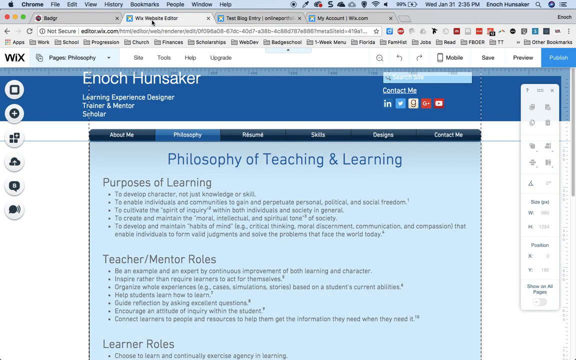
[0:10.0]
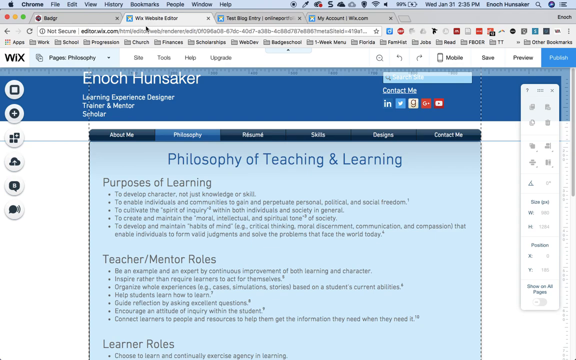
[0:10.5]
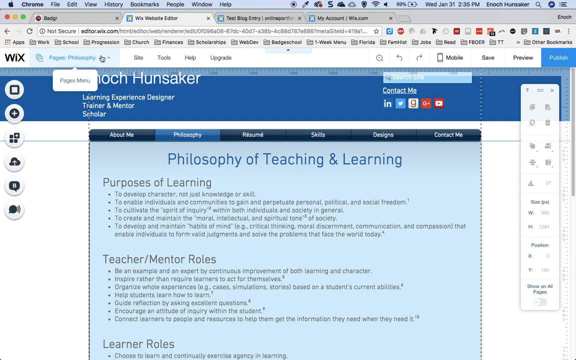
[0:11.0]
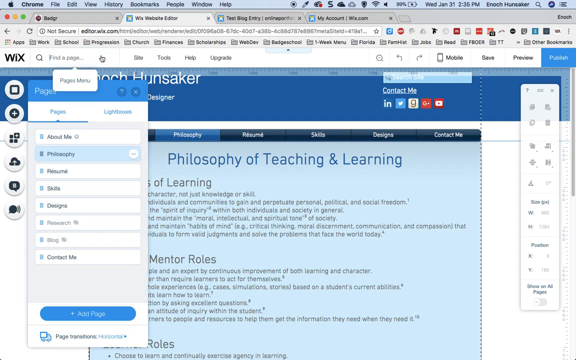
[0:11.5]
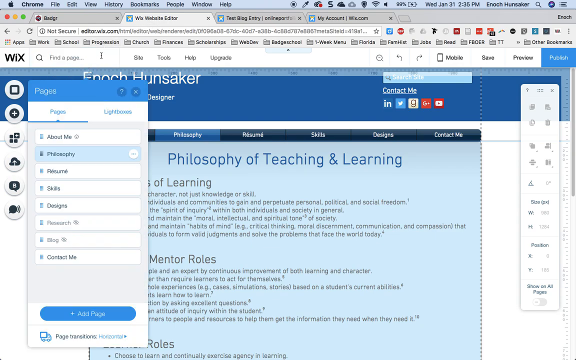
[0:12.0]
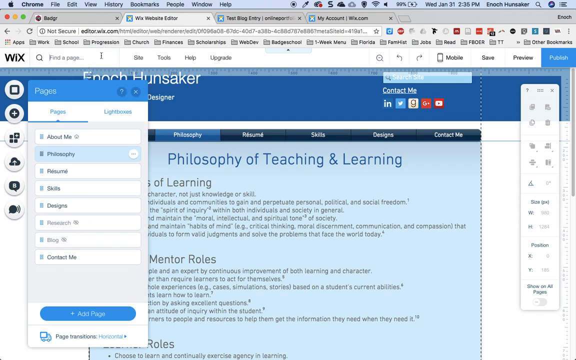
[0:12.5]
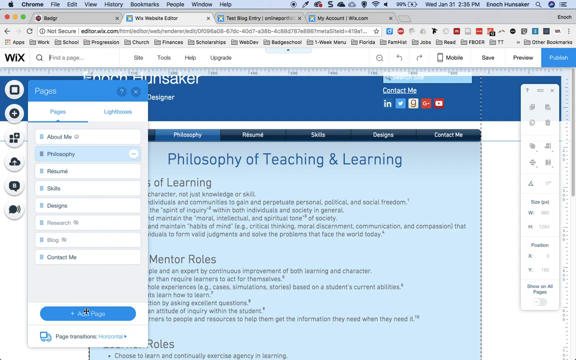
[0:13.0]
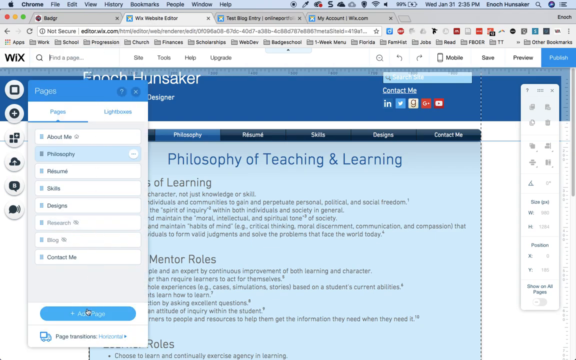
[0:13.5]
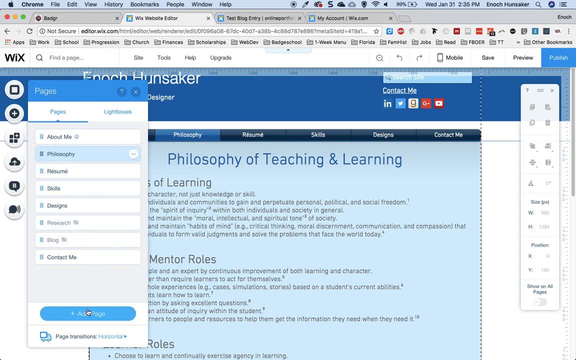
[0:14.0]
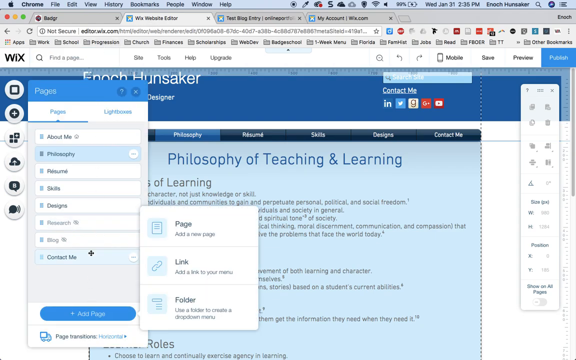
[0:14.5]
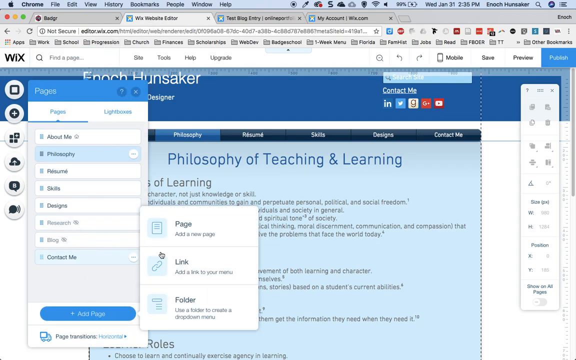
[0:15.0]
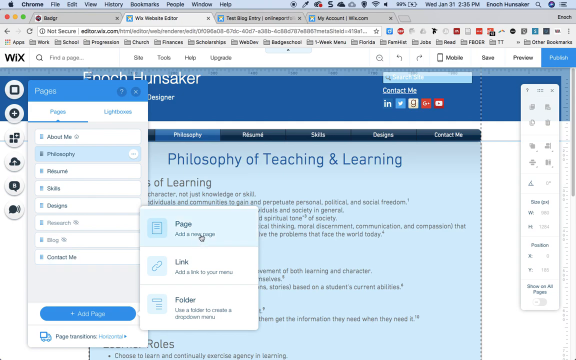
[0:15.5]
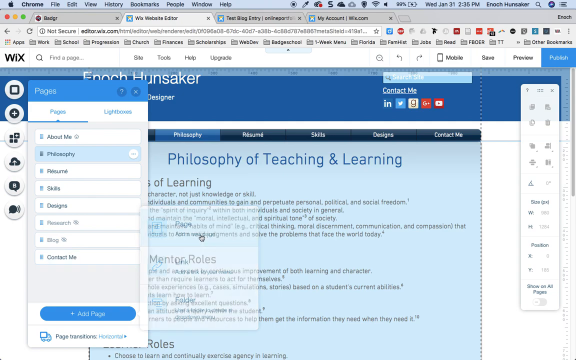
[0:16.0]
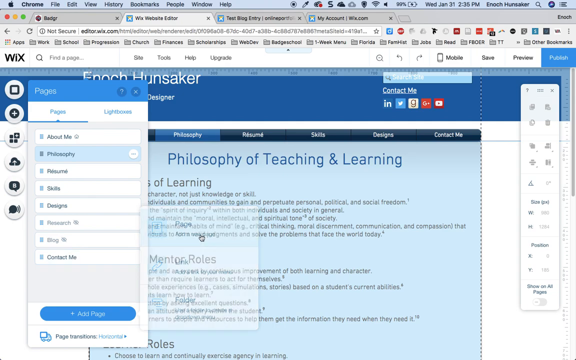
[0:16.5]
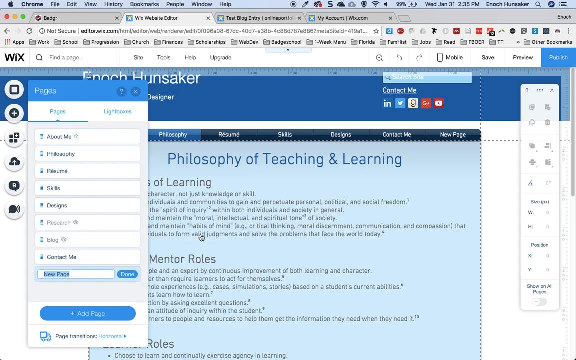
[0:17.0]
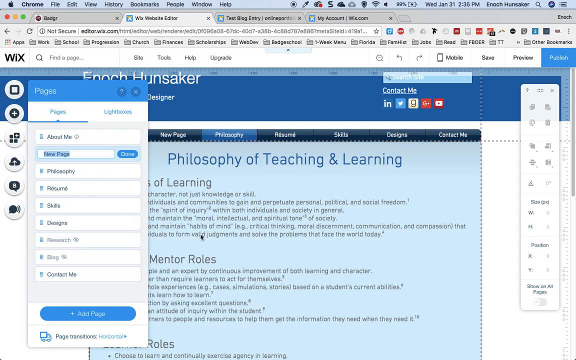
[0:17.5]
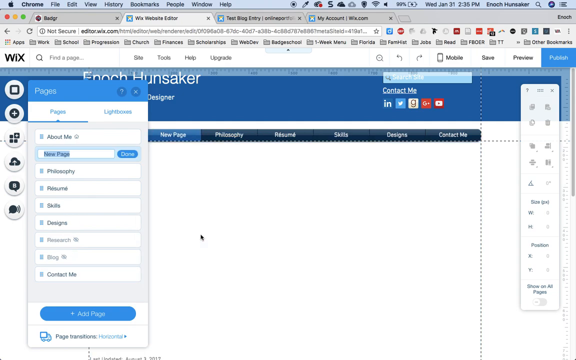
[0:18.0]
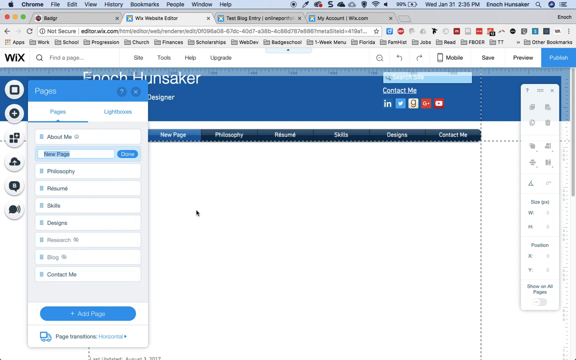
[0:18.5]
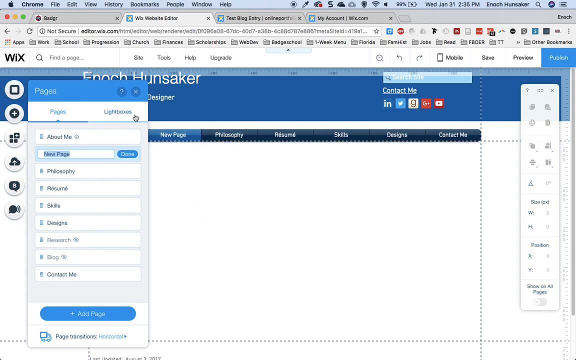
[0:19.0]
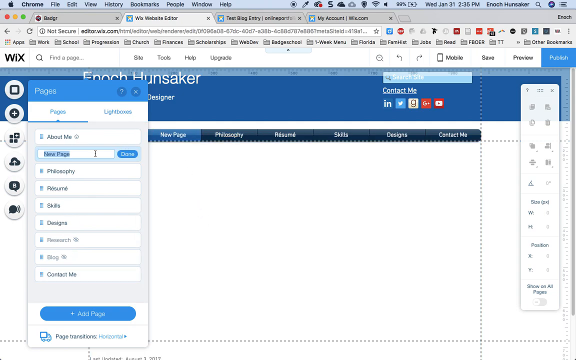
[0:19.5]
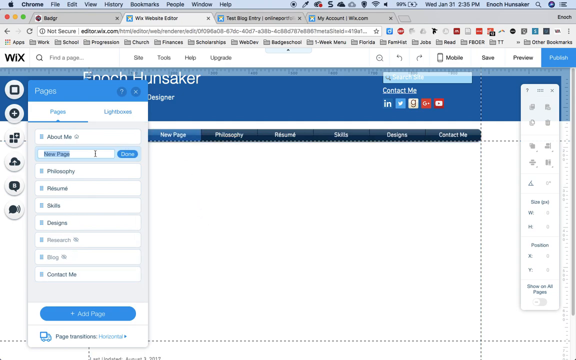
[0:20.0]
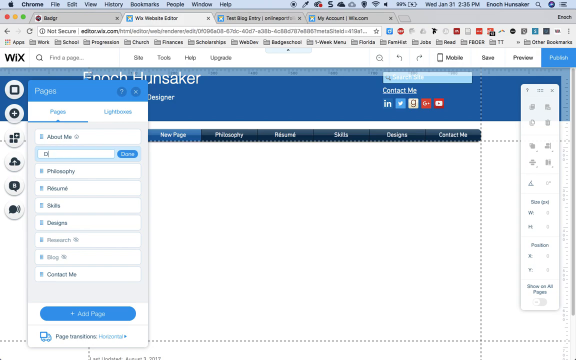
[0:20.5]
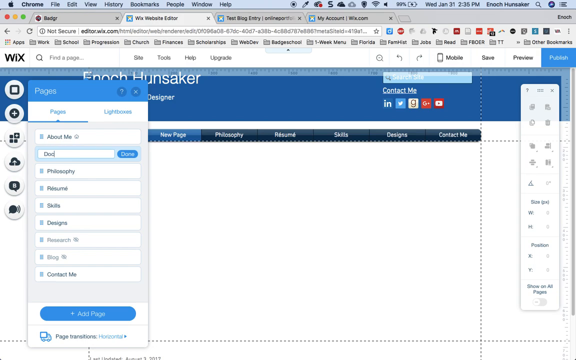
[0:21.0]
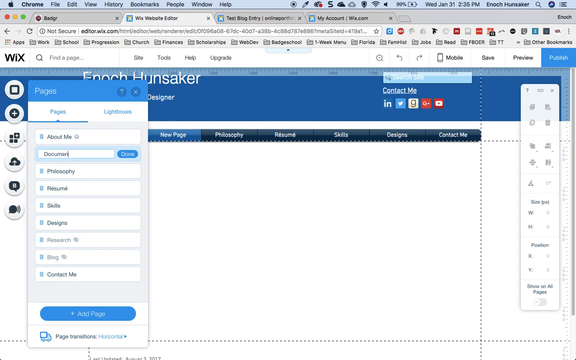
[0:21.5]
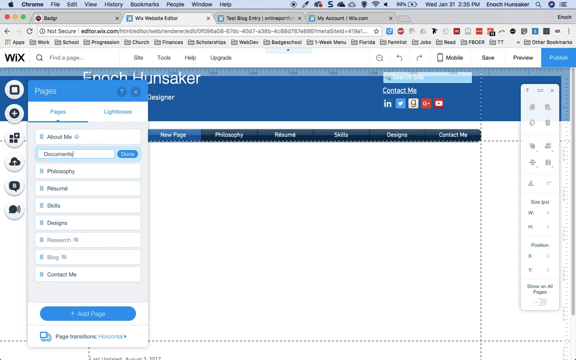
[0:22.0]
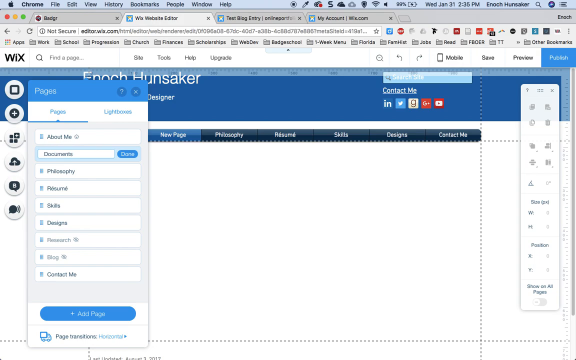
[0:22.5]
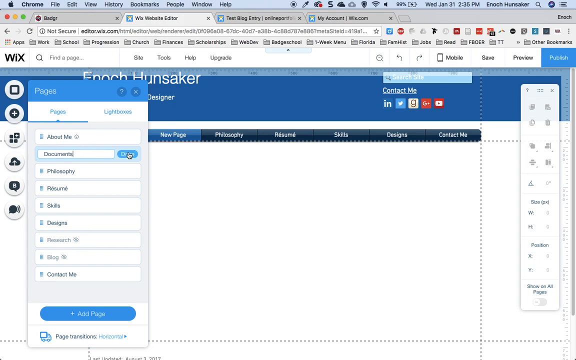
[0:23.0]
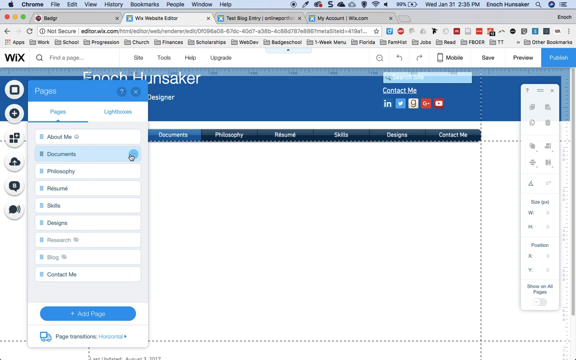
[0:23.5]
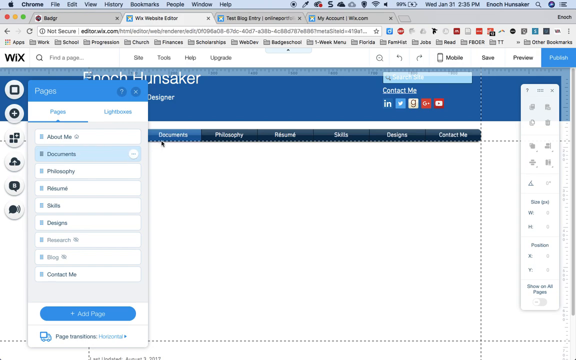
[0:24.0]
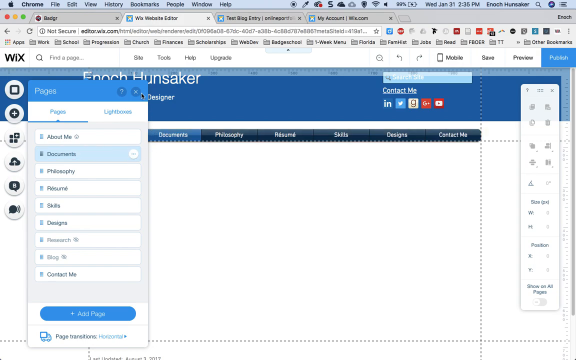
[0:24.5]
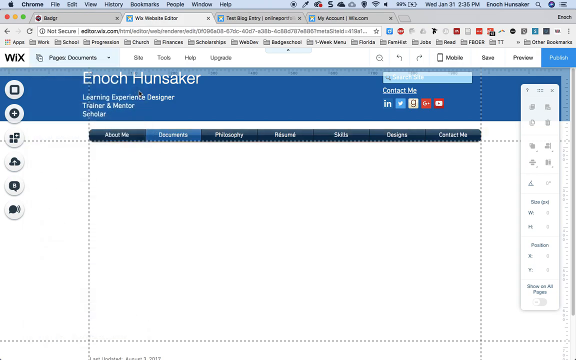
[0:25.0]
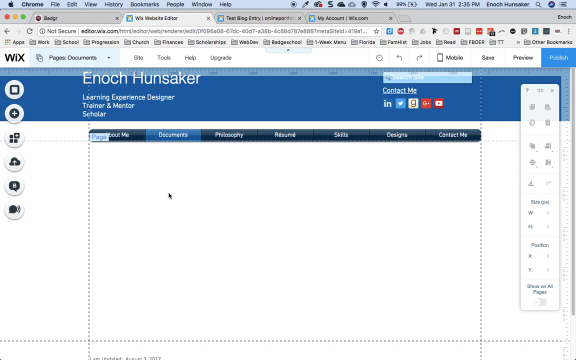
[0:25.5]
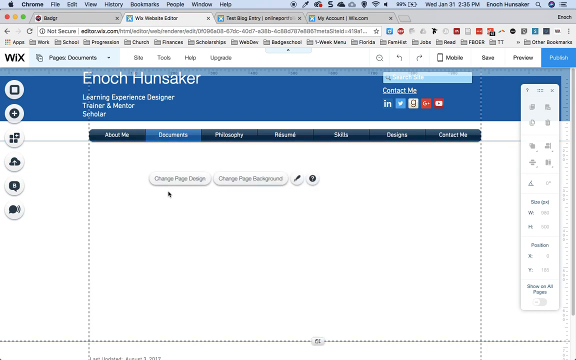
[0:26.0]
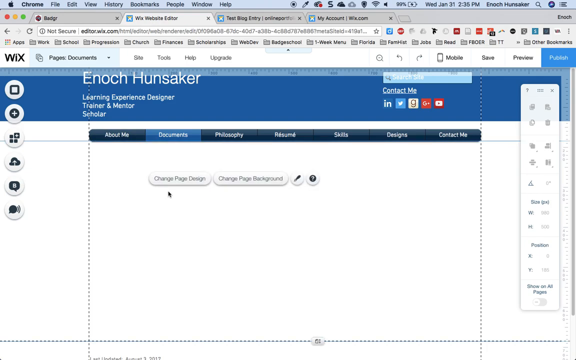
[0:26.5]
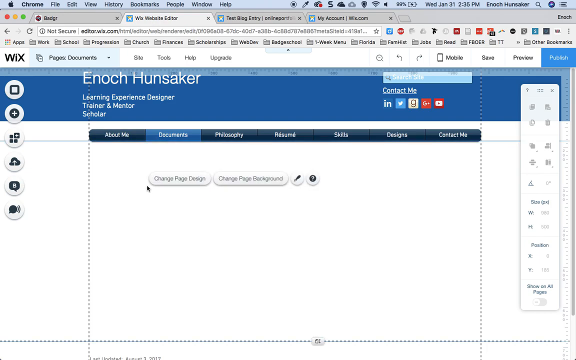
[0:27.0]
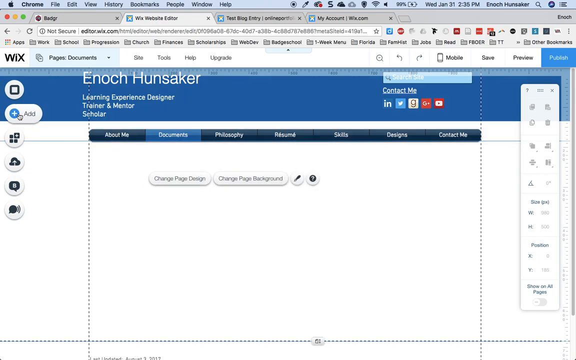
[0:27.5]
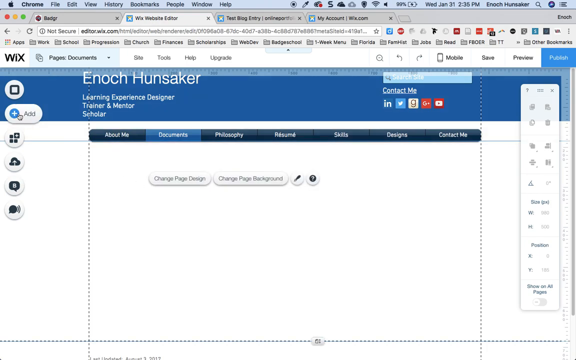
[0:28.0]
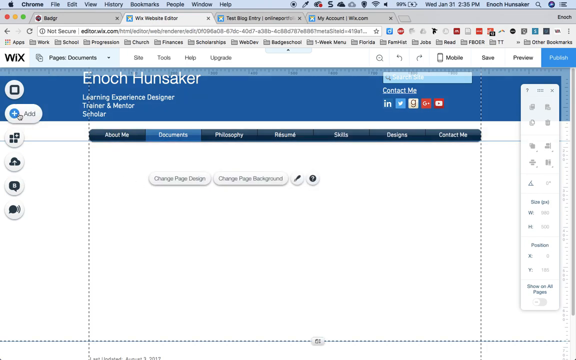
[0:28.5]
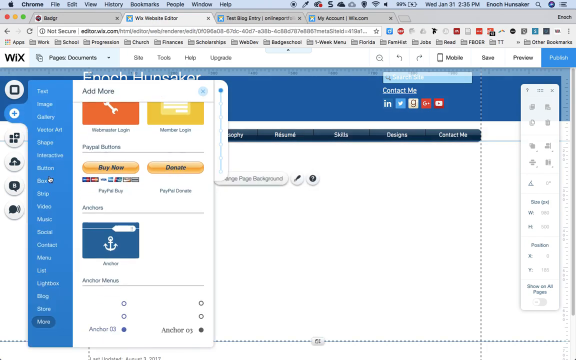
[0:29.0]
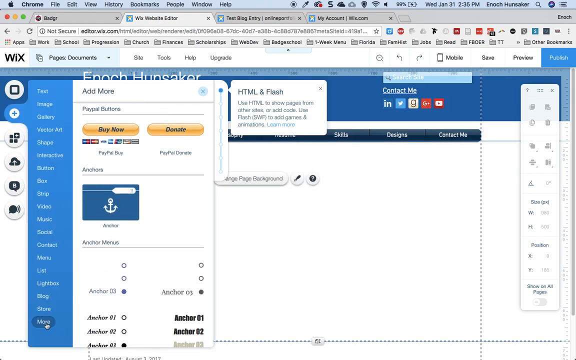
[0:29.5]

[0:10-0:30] A browser tab window shows the name "Enoch Hunsaker". Below it is a small window with some tabs, and the philosophy window is open. Below this, on a blue background, "philosophy of teaching and learning" appears in blue letters, and below that "purposes of learning" in black letters, with black writing to the right of five black dots. Below that it says "teacher/mentor roles", followed by seven black dots with black writing to their right. At the top left of the screen is the Apple logo, and the menu to the right reads Chrome, file, edit, view, history, bookmarks, people, windows, help. The mouse cursor clicks on something, a drop-down menu appears, and it clicks on "add plug-in", then moves to the right and clicks on something. In another drop-down menu, "documents" is typed in and done is clicked. The documents tab is then open, and the cursor goes to the add button on the left side of the screen.